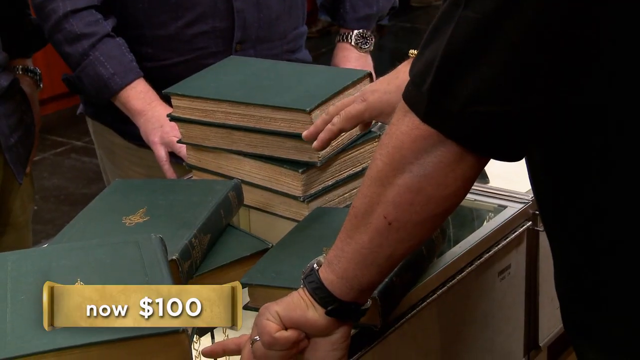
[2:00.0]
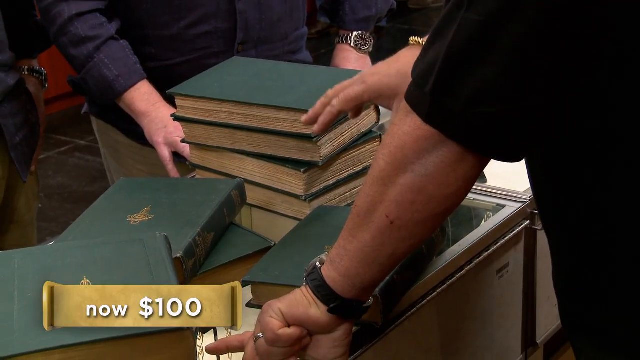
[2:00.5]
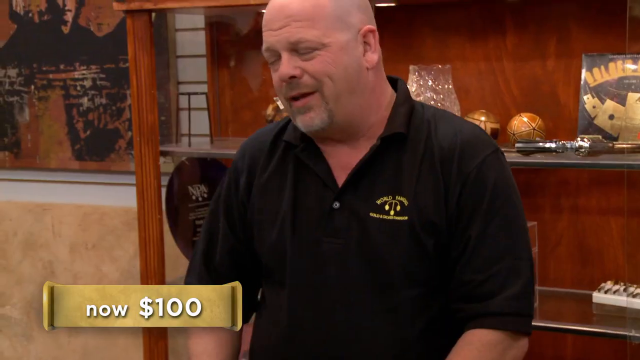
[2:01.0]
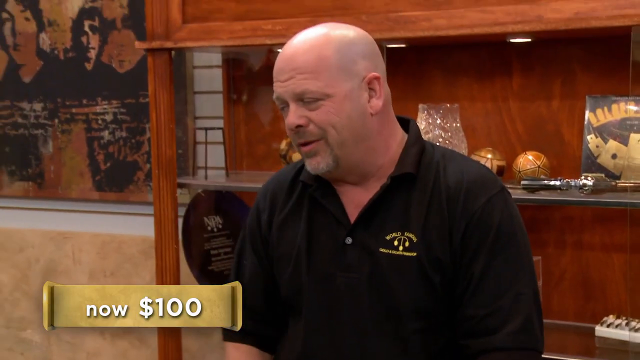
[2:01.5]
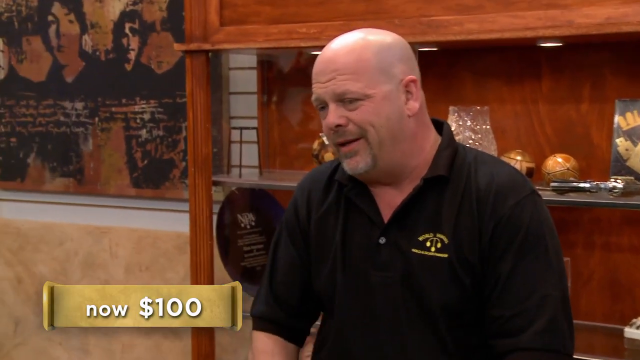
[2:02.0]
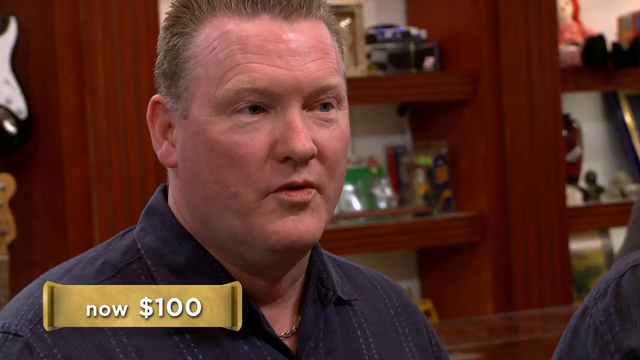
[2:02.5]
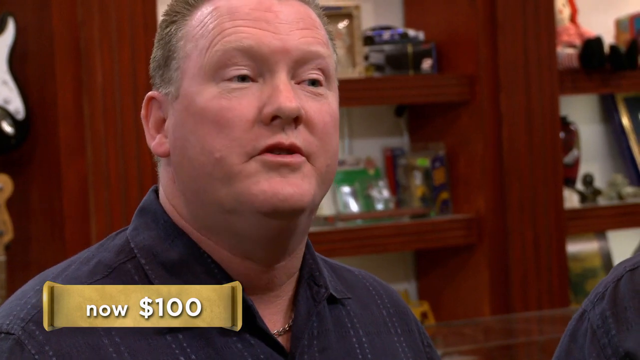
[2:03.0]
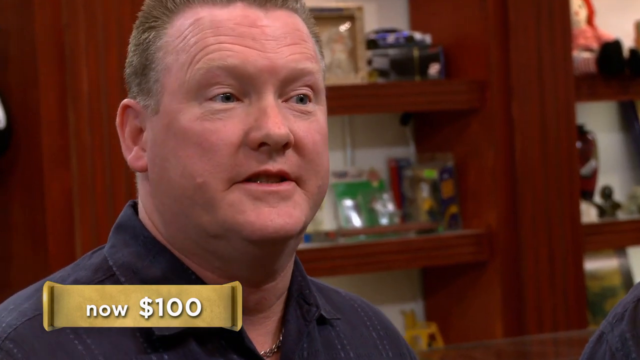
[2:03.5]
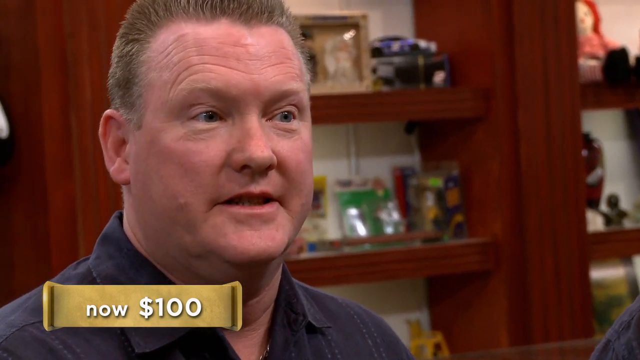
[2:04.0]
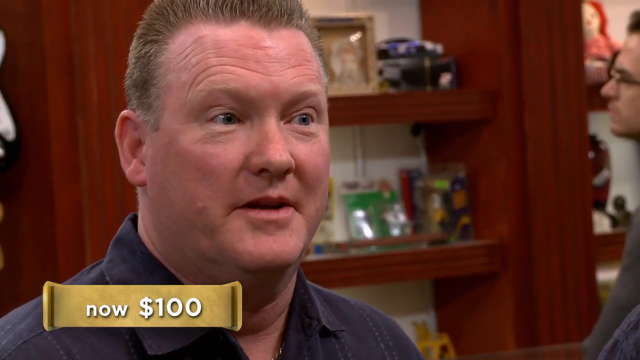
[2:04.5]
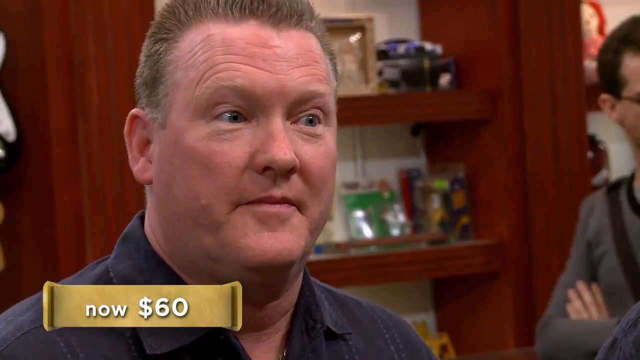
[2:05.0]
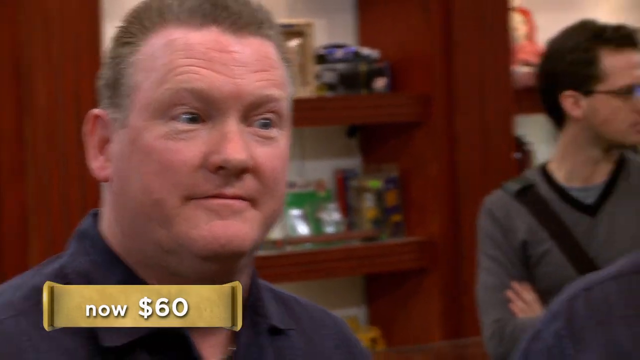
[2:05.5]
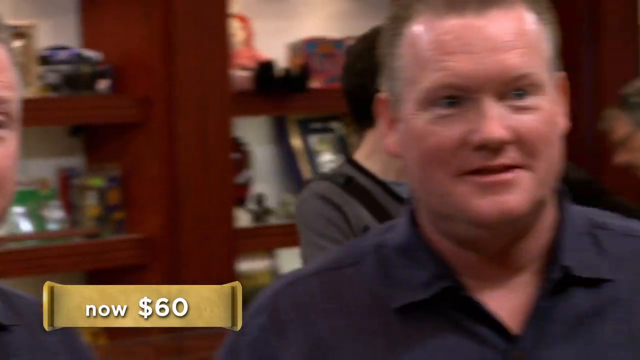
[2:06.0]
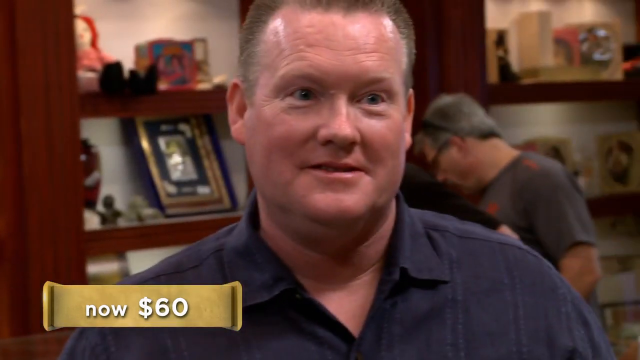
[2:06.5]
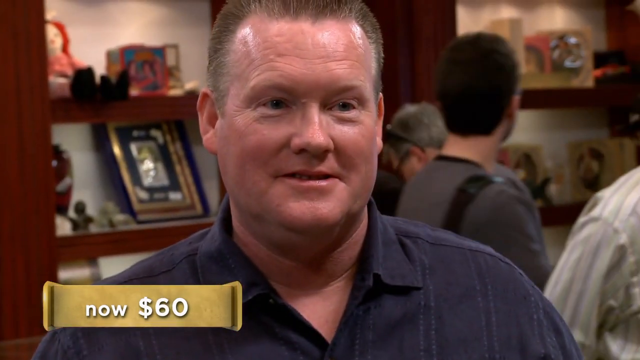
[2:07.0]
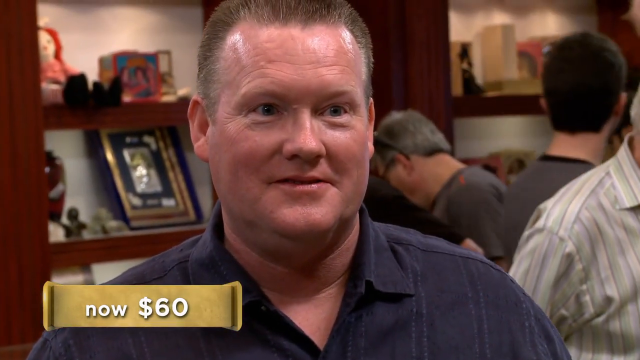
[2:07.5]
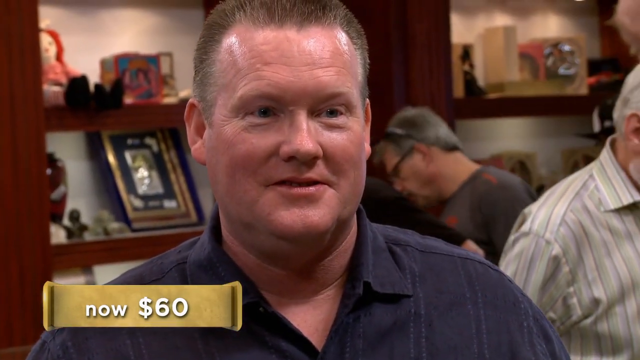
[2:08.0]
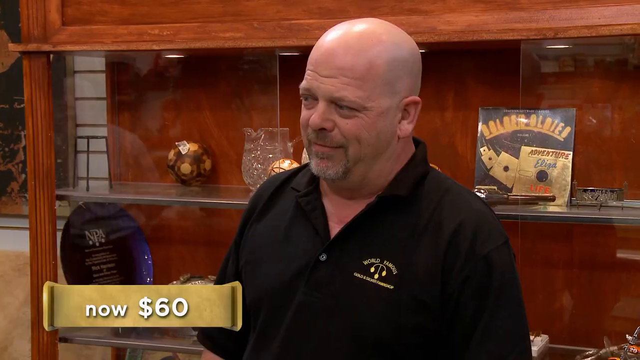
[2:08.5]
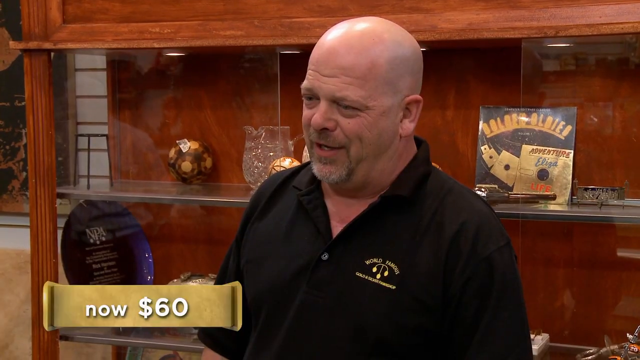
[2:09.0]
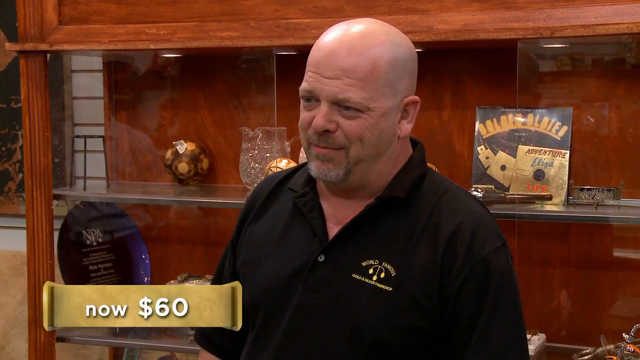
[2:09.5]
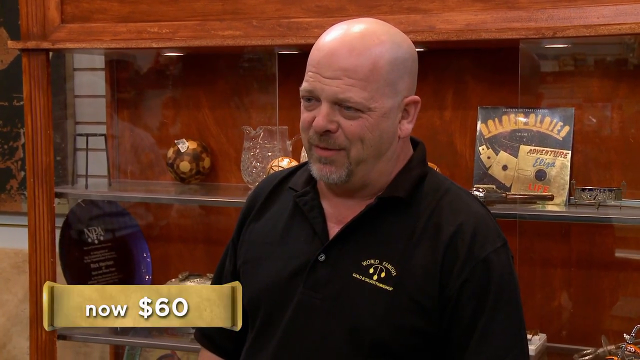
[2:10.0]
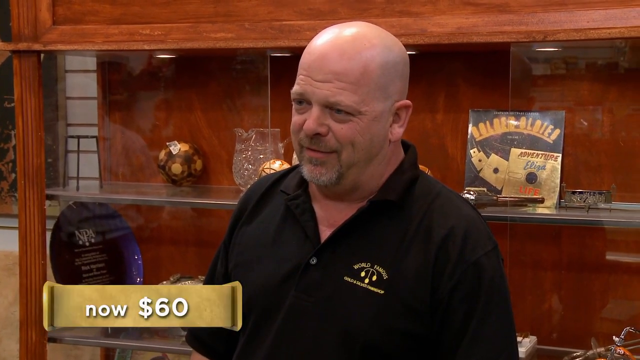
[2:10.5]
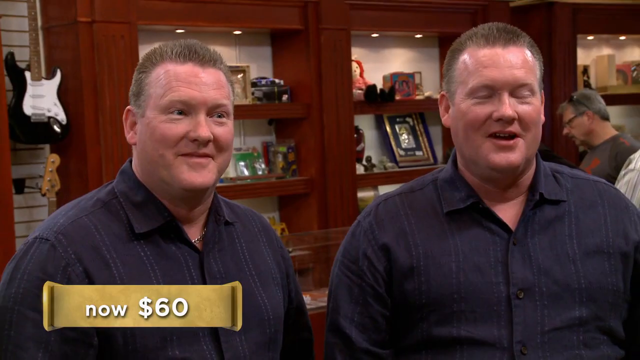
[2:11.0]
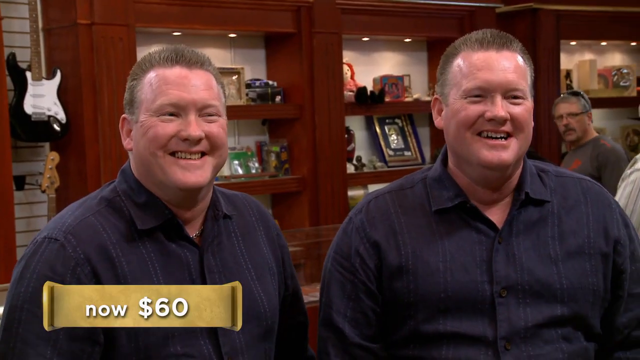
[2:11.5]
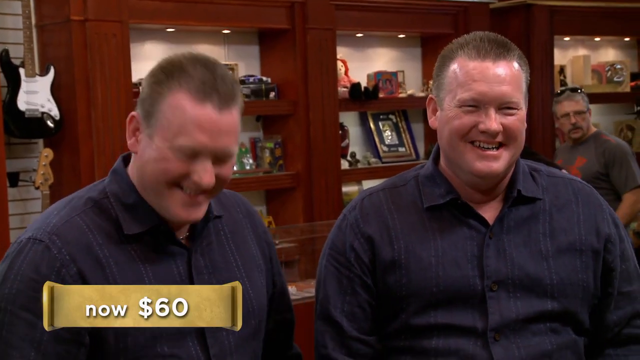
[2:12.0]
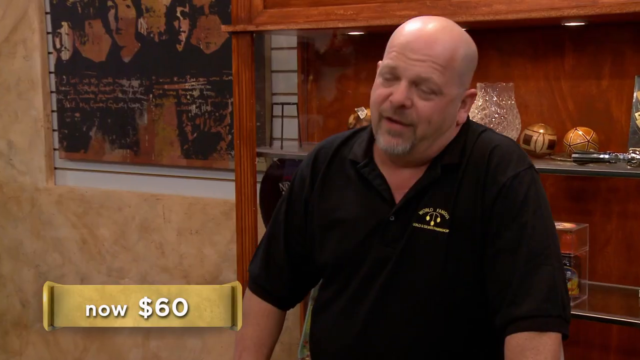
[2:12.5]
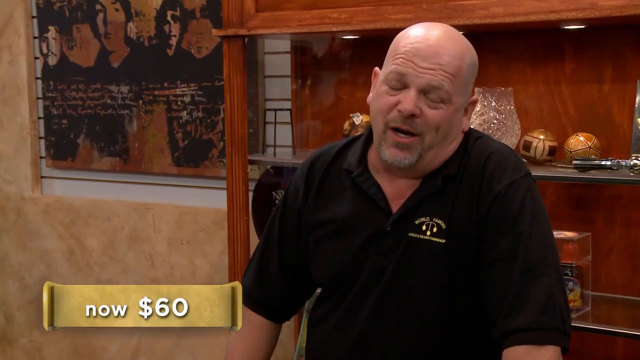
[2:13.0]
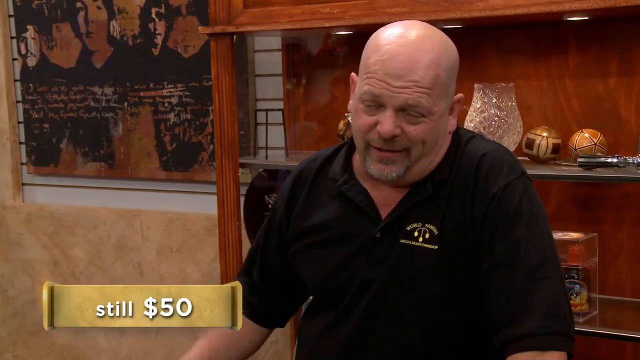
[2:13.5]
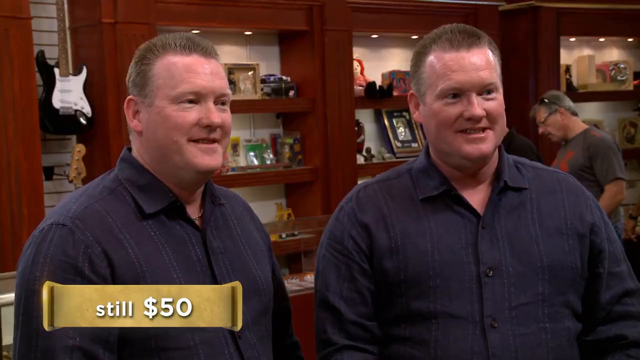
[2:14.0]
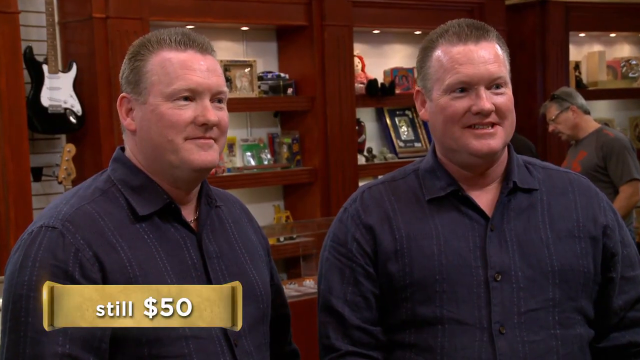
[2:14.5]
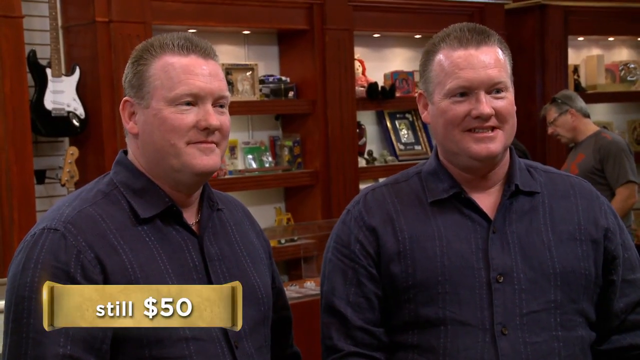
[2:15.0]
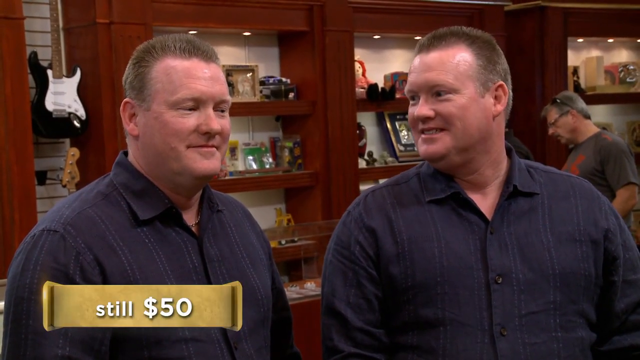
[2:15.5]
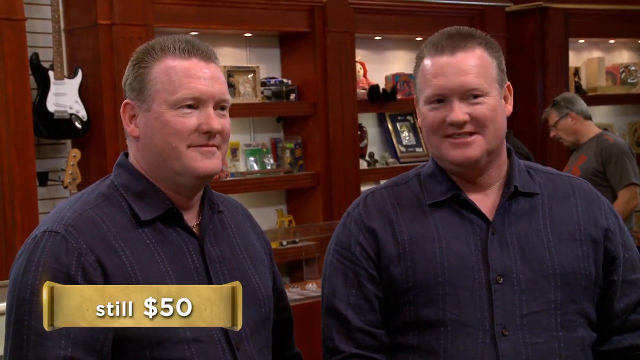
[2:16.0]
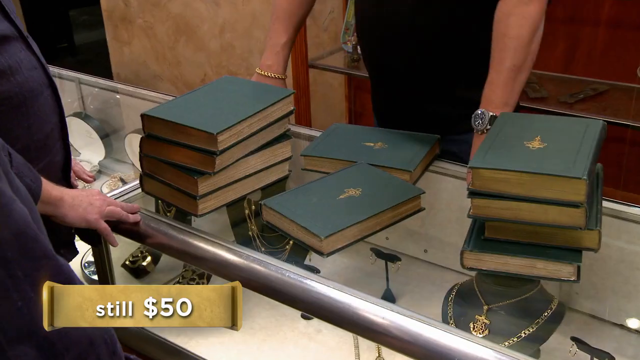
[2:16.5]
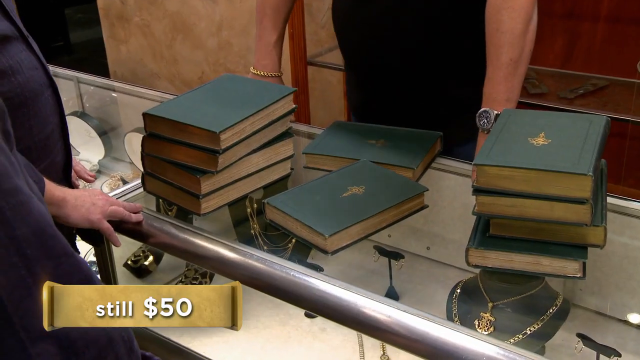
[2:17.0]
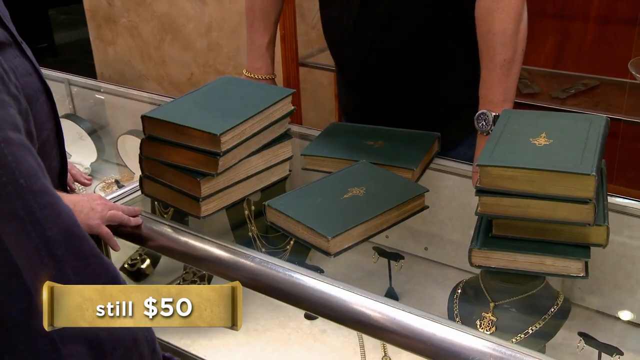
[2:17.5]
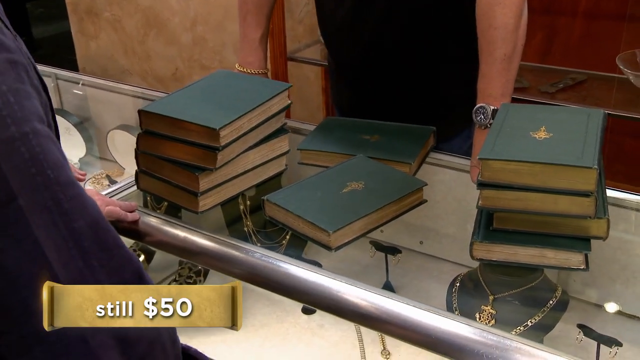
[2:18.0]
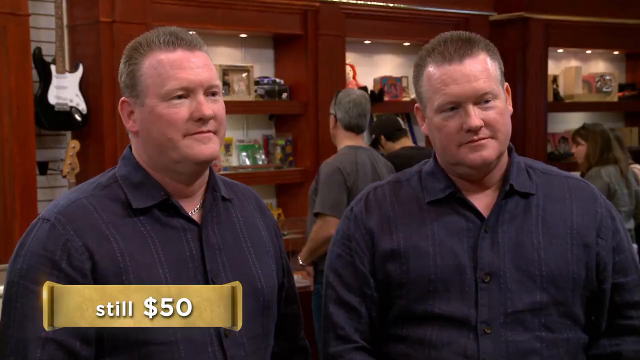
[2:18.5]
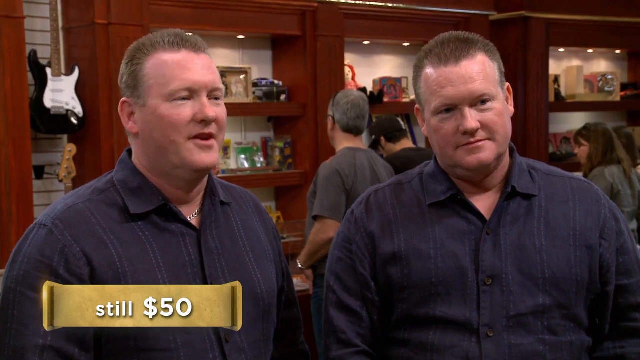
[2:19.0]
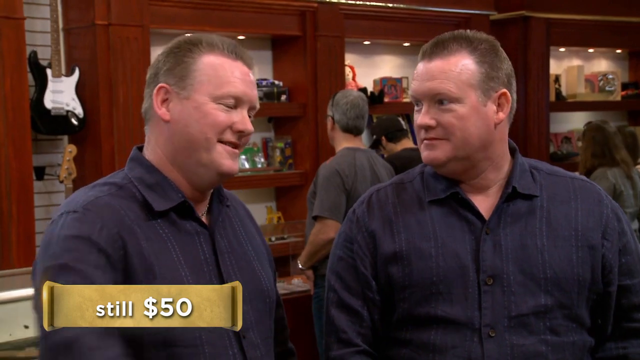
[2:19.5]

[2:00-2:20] A close-up of the books continues, and the man in the short black shirt, who seems to be a valuer or antique dealer, keeps talking to one of the brothers while a hundred dollars shows on screen. The value on screen then drops to sixty dollars, the brothers laugh, and then it drops to fifty dollars. One of the brothers in a blue shirt smiles and shakes hands with the man in the short black shirt, apparently making some sort of deal. People are still milling around behind them.